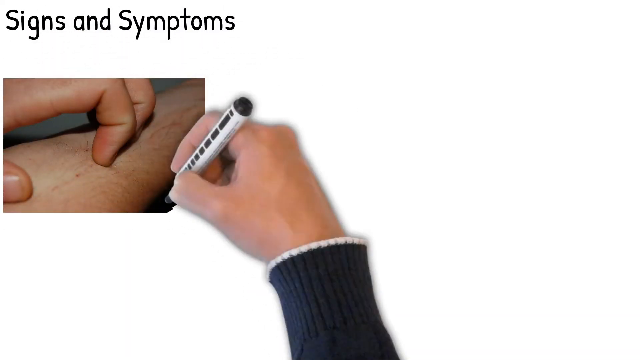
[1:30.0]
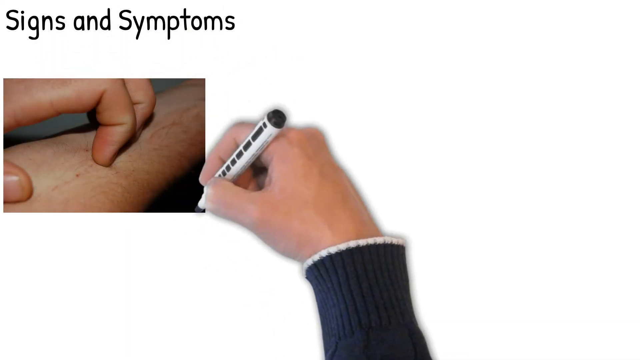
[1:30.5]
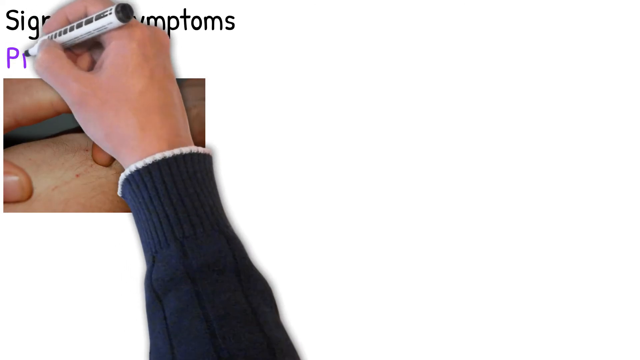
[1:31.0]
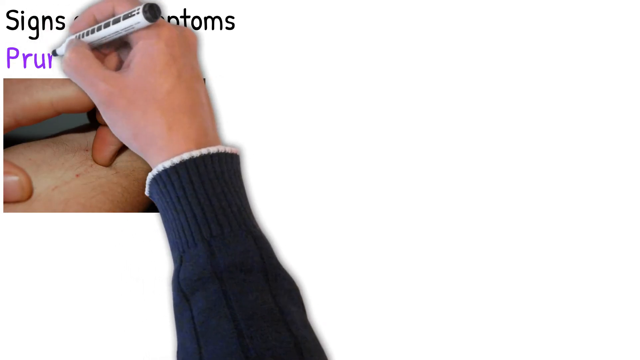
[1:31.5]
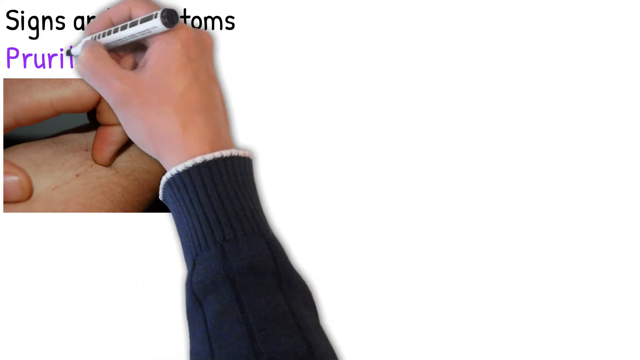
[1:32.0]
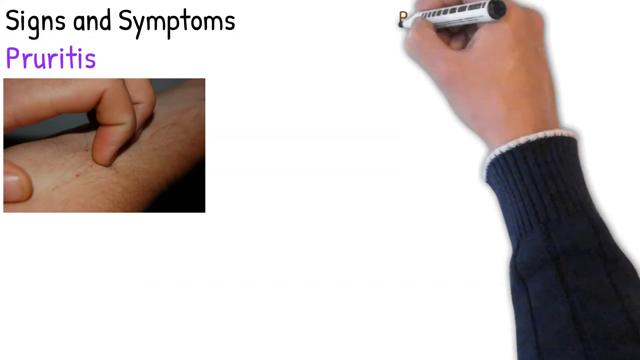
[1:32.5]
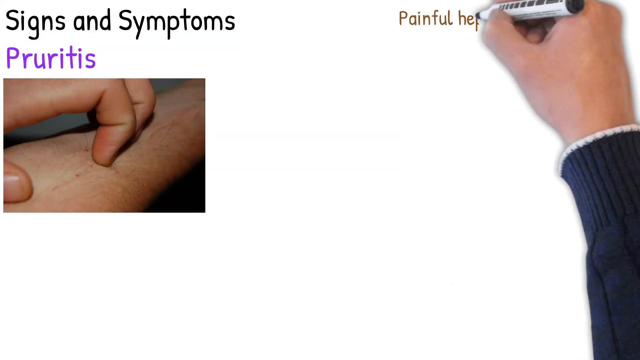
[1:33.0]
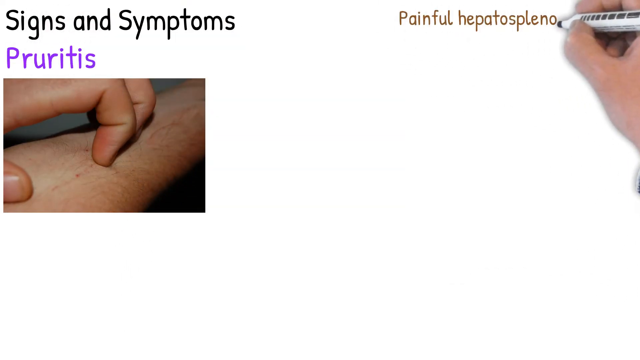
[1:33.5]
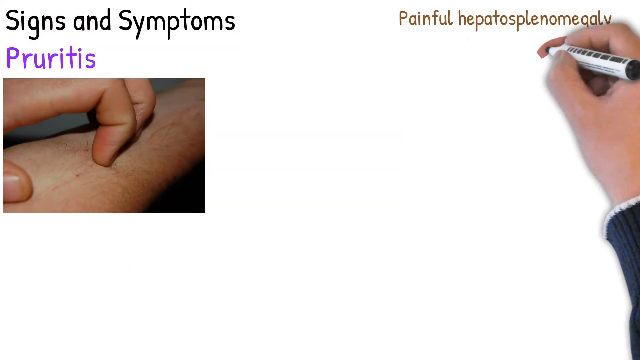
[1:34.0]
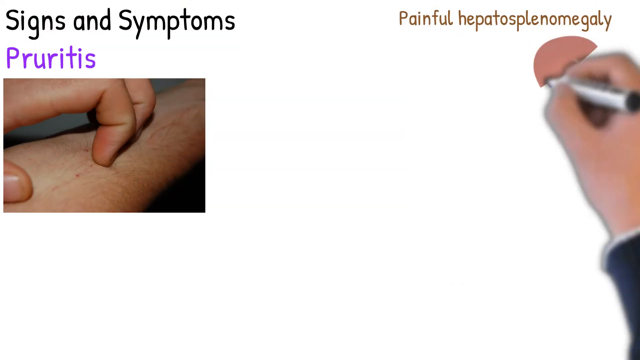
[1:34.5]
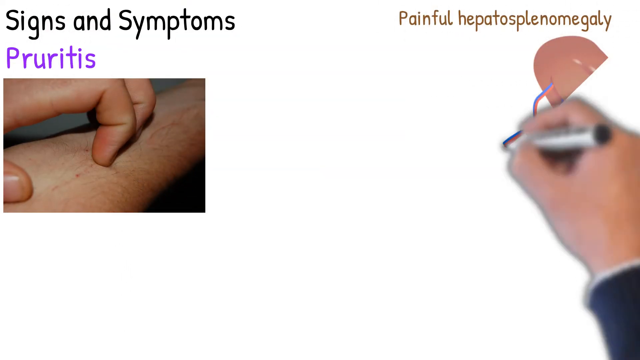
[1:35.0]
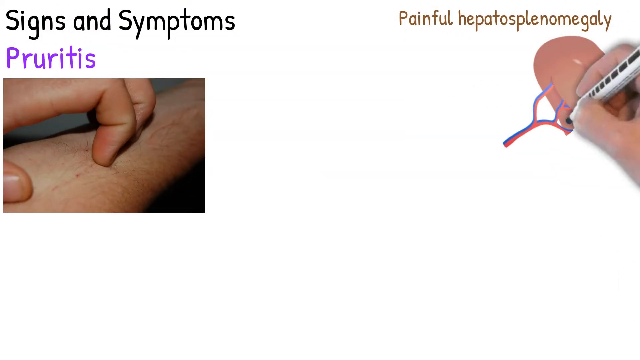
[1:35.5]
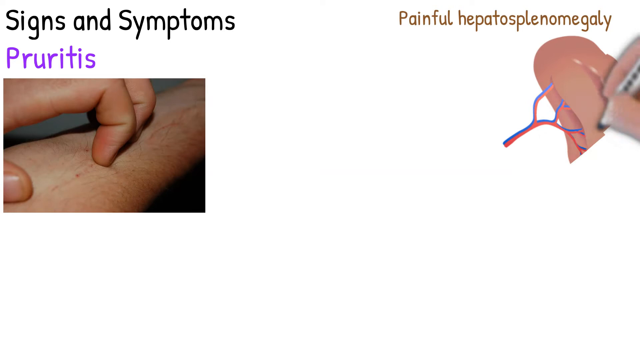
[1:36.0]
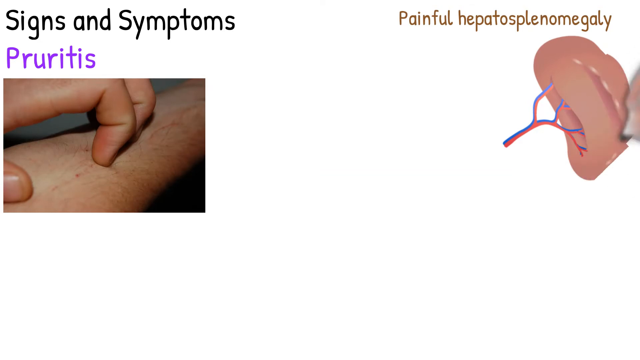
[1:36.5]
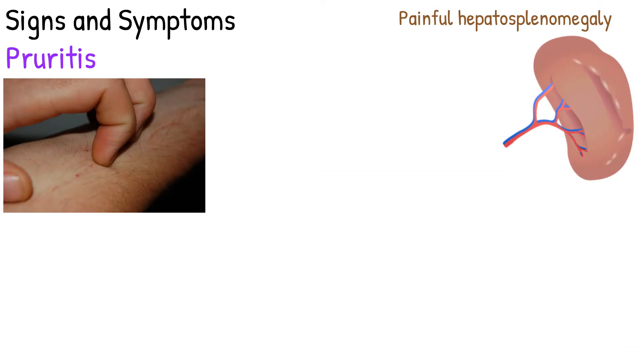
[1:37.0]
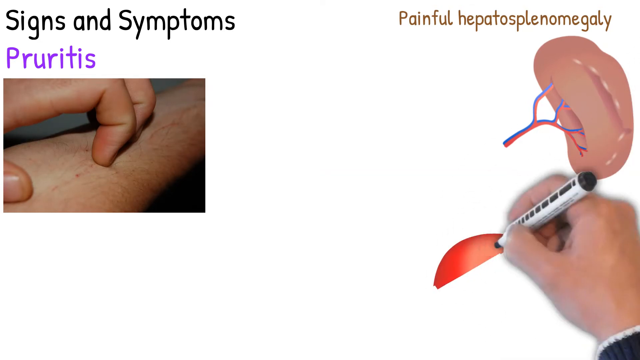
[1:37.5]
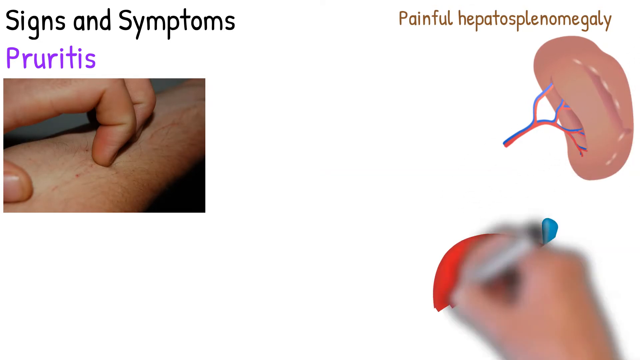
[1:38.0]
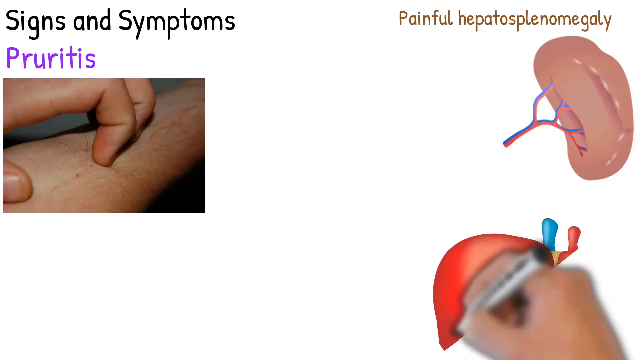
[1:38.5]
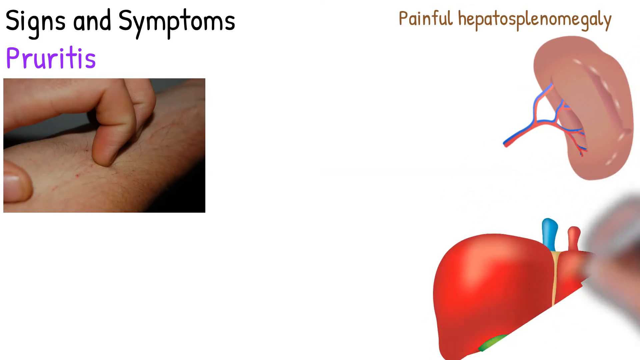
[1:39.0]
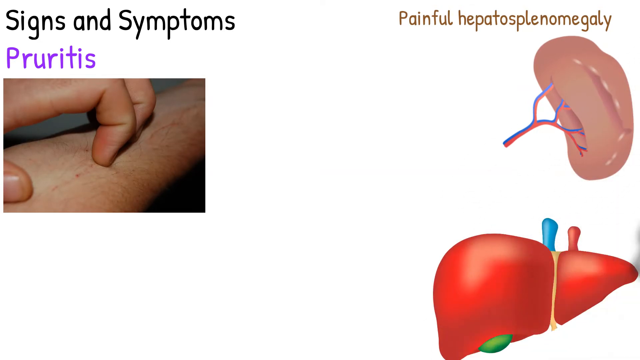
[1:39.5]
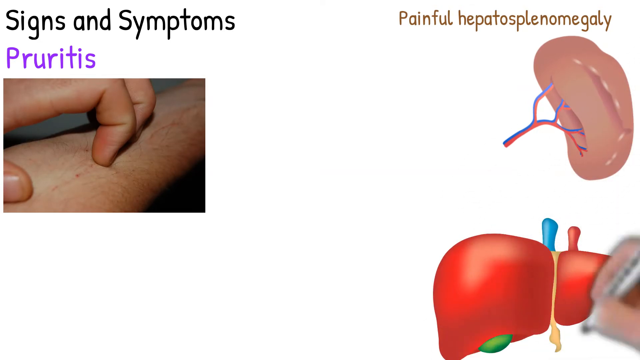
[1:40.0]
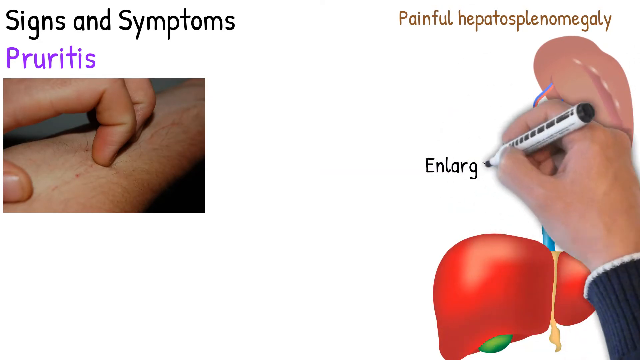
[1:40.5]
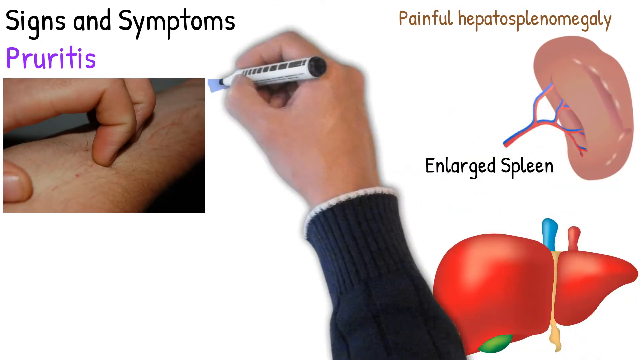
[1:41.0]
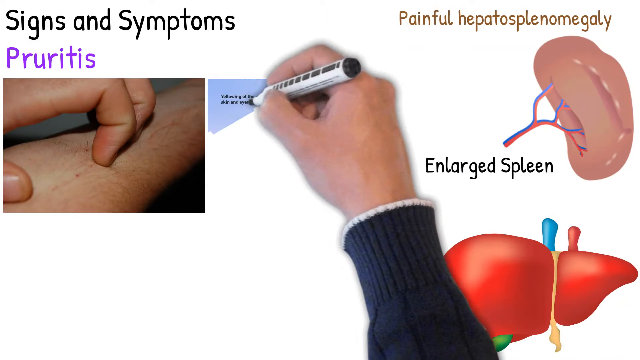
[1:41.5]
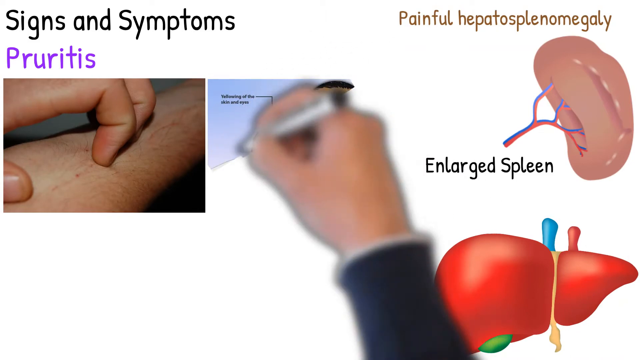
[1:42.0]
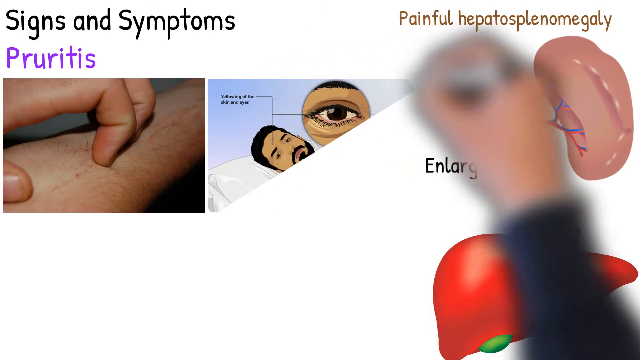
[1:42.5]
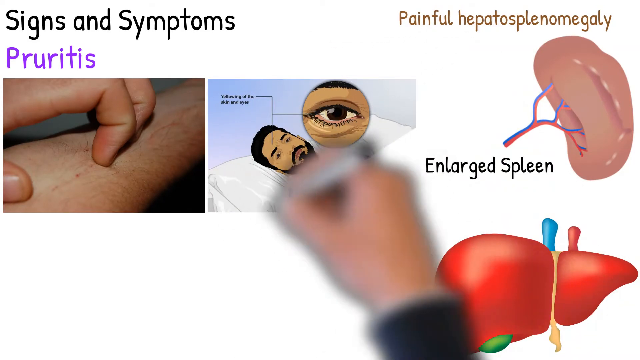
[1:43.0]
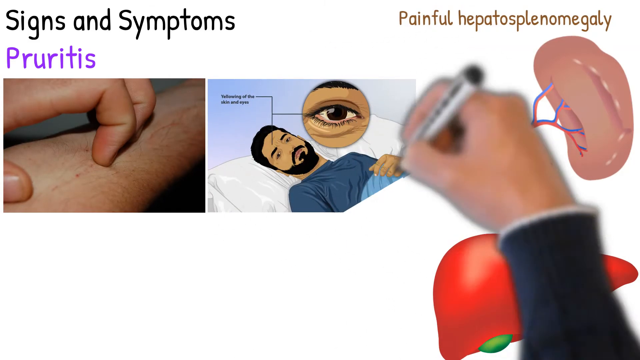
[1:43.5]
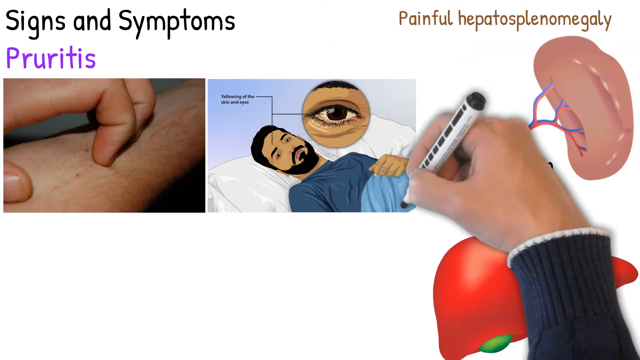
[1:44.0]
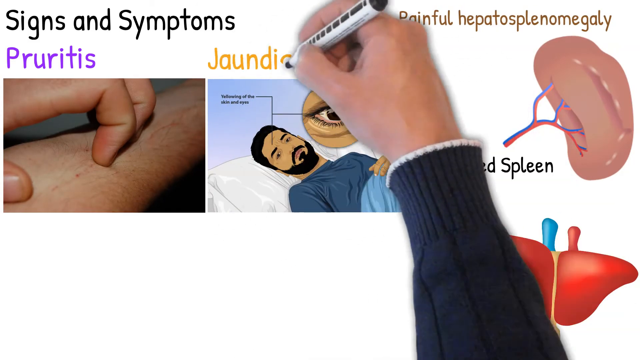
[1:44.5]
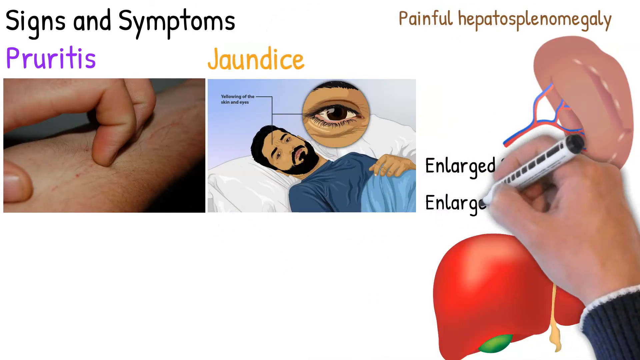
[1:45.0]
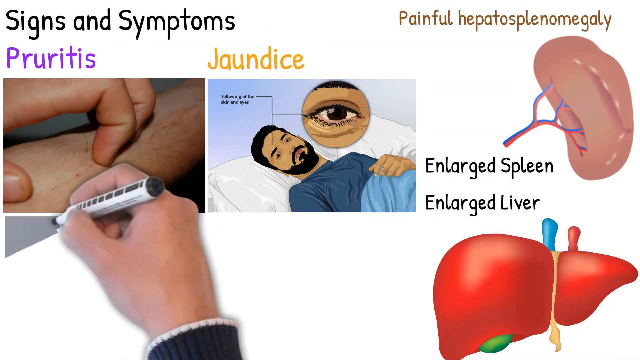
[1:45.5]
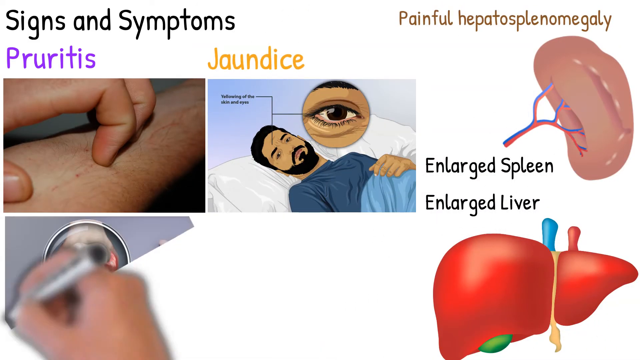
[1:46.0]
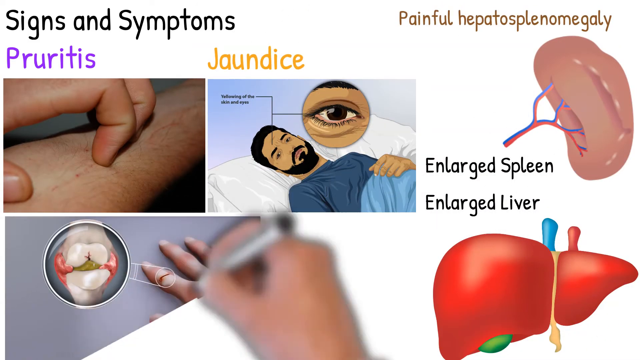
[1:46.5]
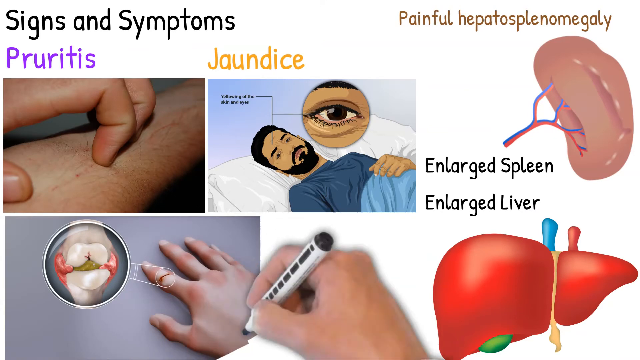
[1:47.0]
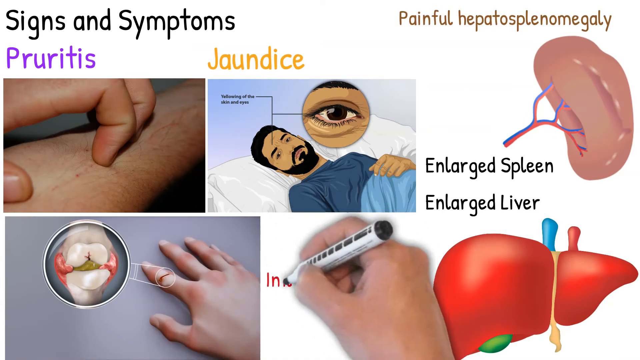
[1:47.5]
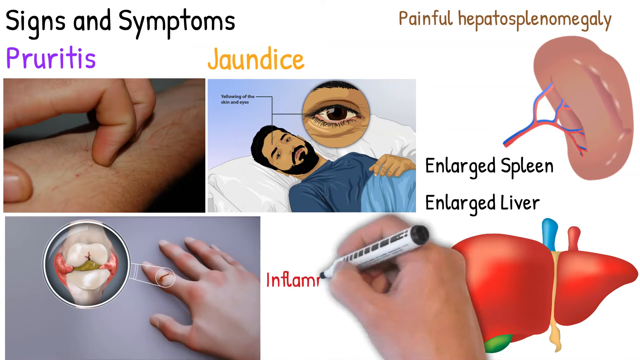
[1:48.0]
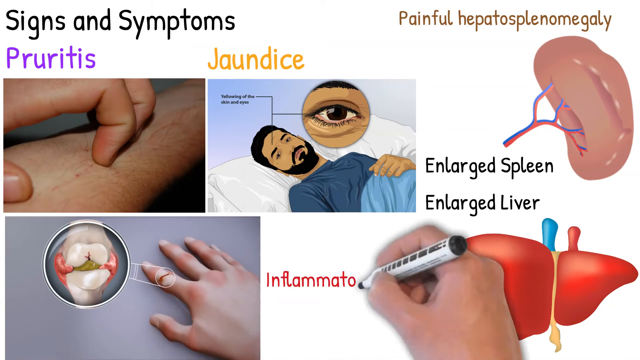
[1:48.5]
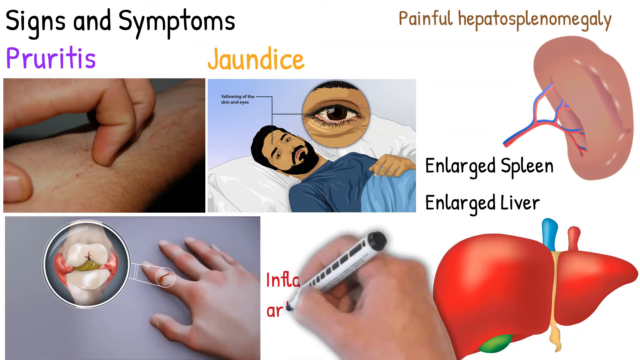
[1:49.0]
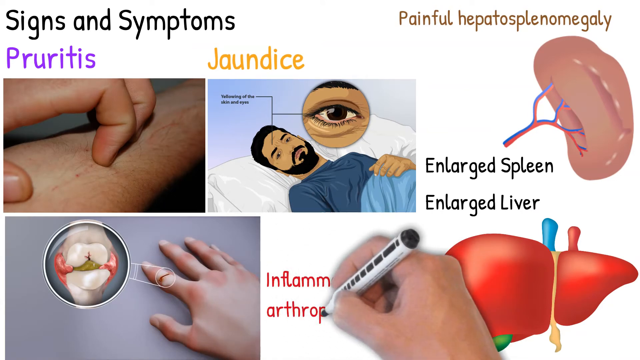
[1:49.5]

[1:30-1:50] The Caucasian right hand draws a Caucasian left hand scratching the forearm of the right arm, showing mainly the end of the thumb and the thumbnail, the index finger, and a little of the middle finger of the scratching hand. Above the image, black text reads "signs and symptoms", and beneath it, purple text reads "pruritus". The drawing hand moves to the upper right quadrant and writes "painful" in light brown text. It draws a kidney on the right of the image: pink, somewhat bean-shaped, with red and blue veins connected to its left side, pointing down. Beneath it, the hand draws a liver with a blue artery and a red artery coming out of the very top, and text reads "enlarged spleen".